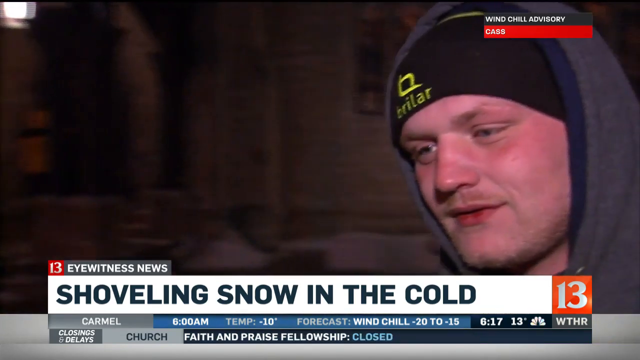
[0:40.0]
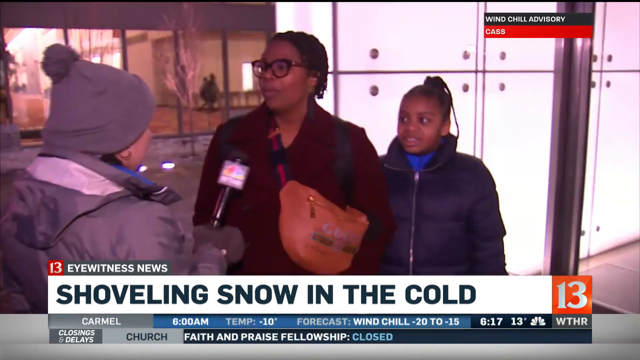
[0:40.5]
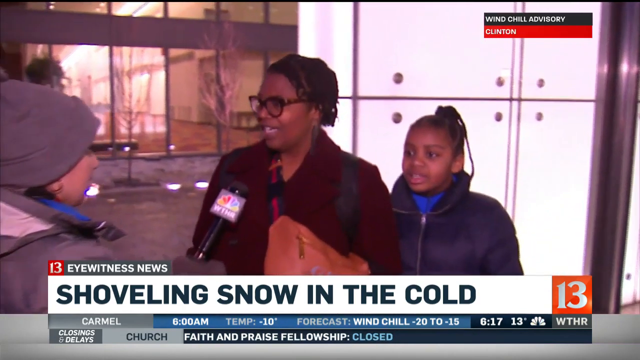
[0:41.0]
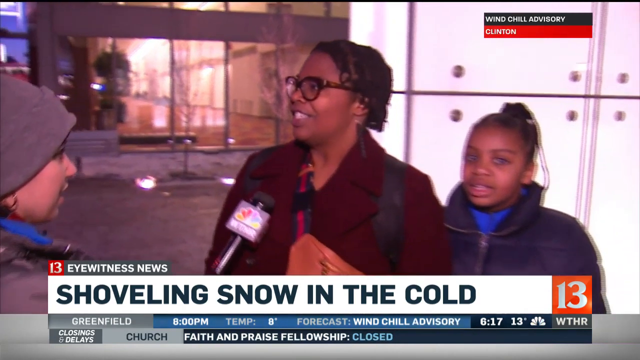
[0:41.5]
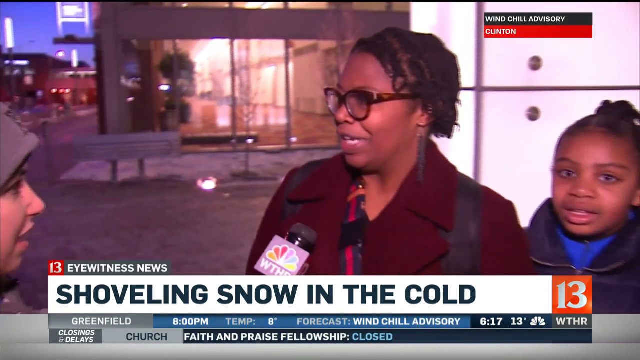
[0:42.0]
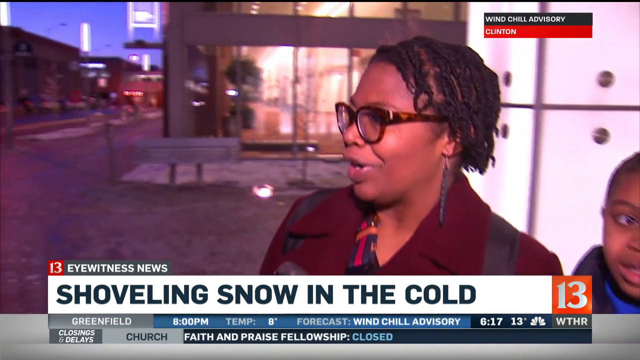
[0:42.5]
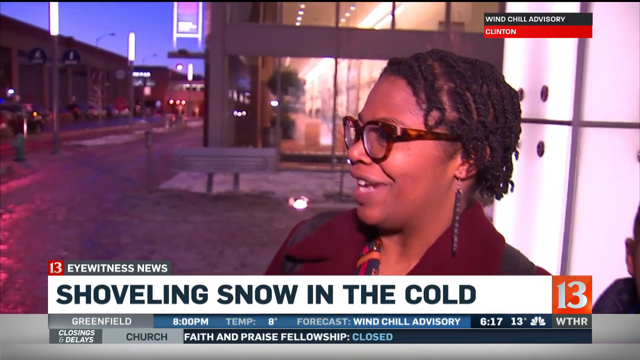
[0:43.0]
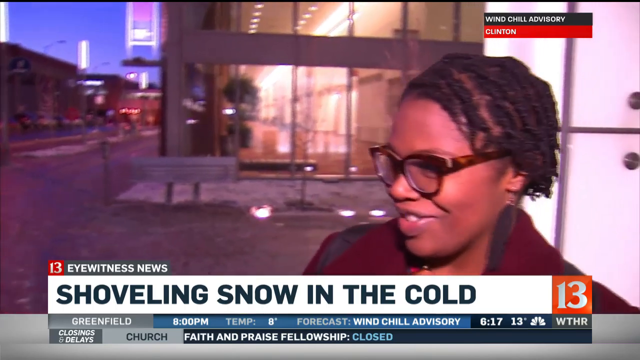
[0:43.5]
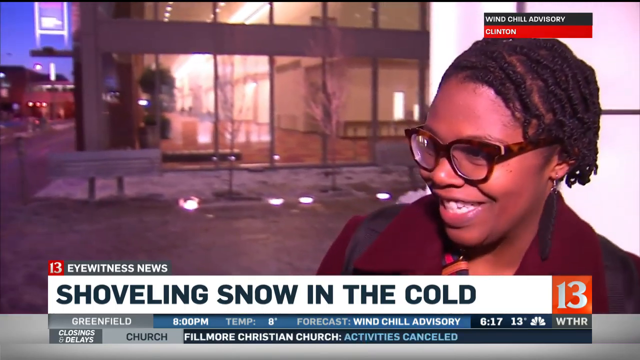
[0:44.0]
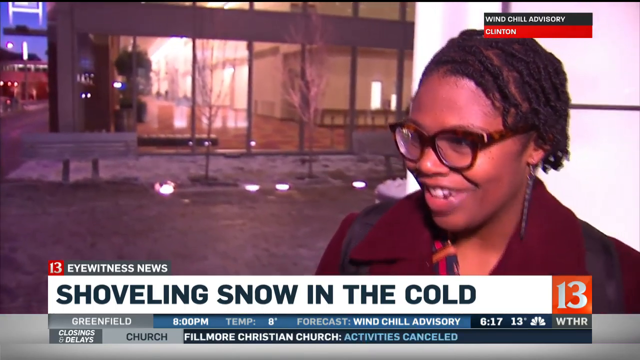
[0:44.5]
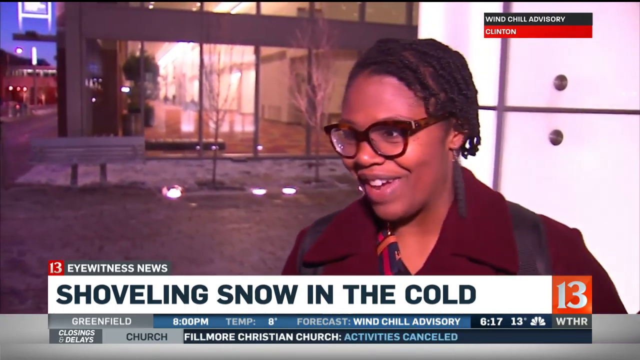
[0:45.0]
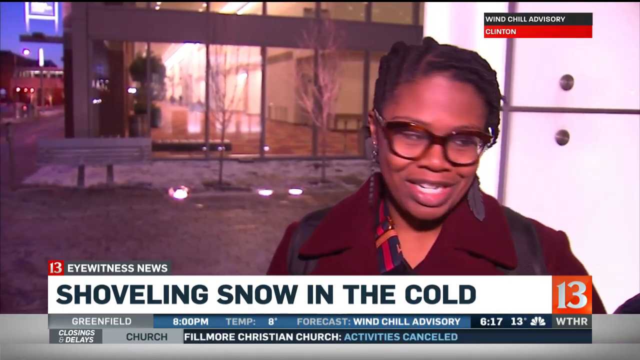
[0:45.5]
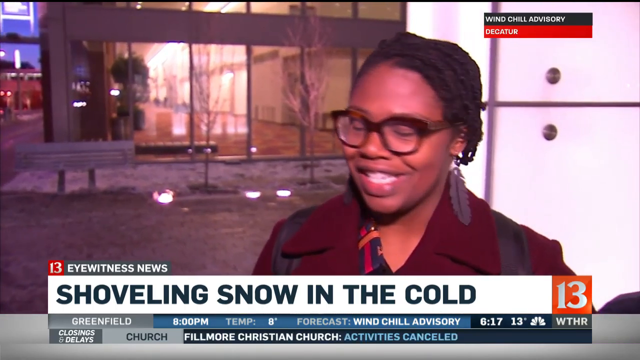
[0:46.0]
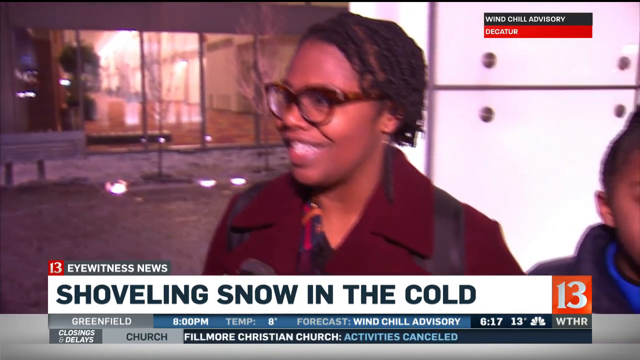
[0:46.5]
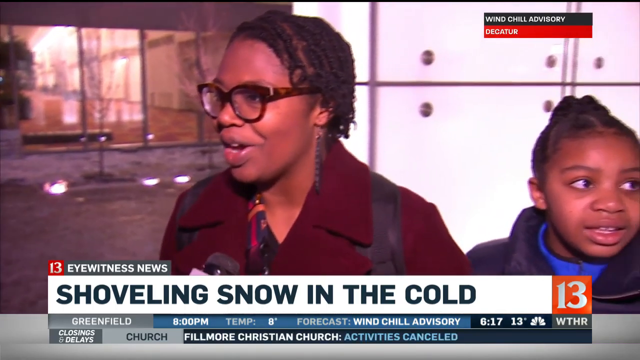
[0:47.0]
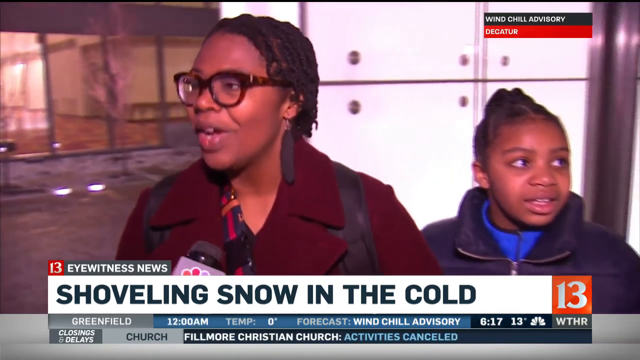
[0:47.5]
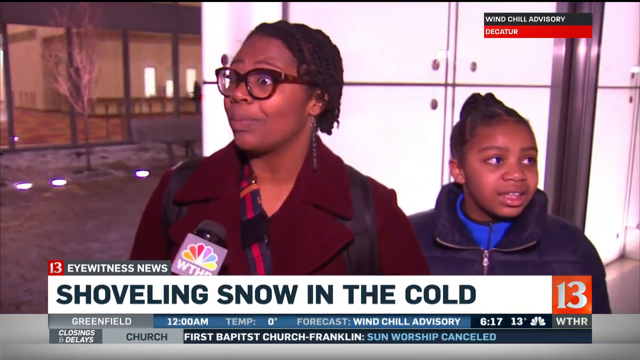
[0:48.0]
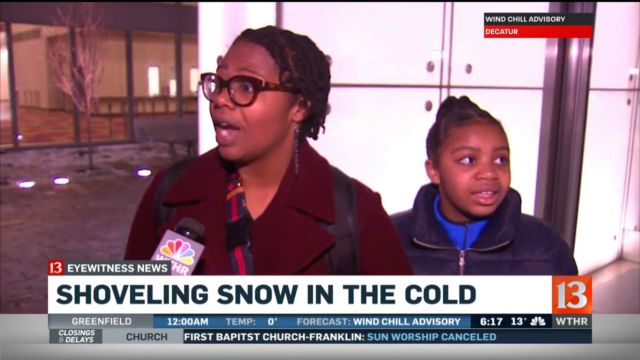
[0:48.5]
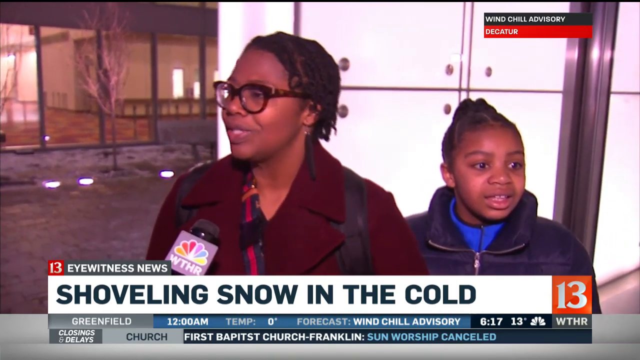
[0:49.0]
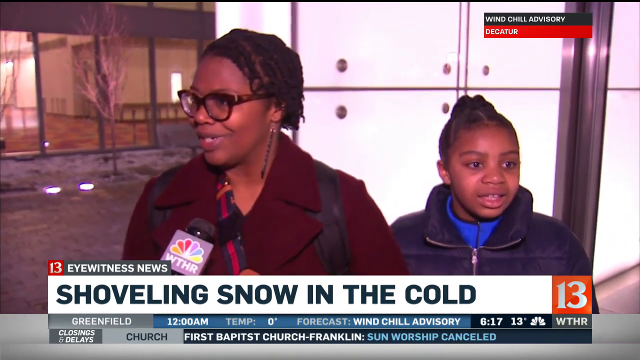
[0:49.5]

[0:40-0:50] A young man appears with a red-looking face. She wears a hoodie, a beanie and a net. A woman in a black robe, spectacles and a maroon jacket speaks to the press while with a small girl, her daughter. The woman laughs and looks at her daughter, who looks cold, and keeps talking. The video then cuts to a glass building that is lit and empty inside, then moves through the street before cutting away.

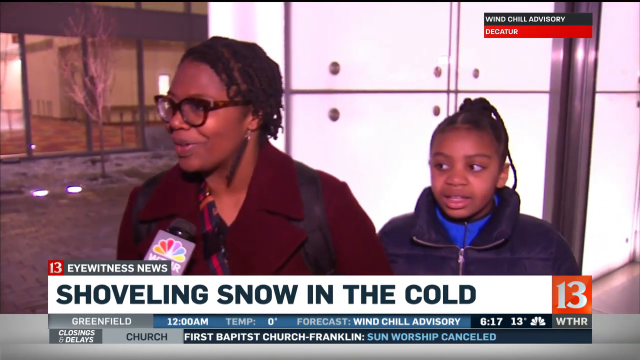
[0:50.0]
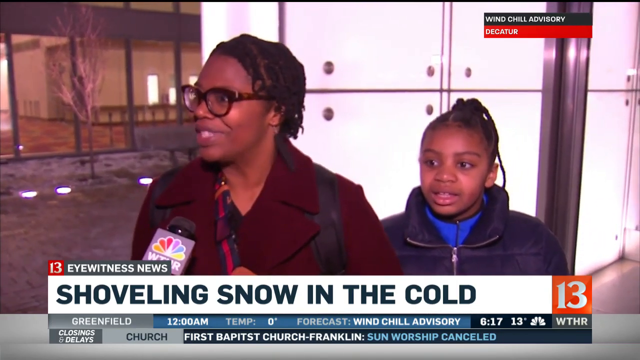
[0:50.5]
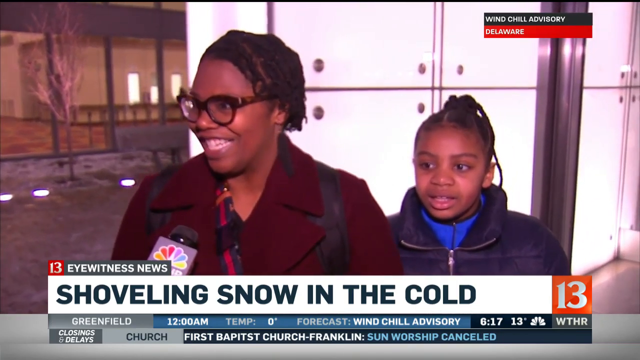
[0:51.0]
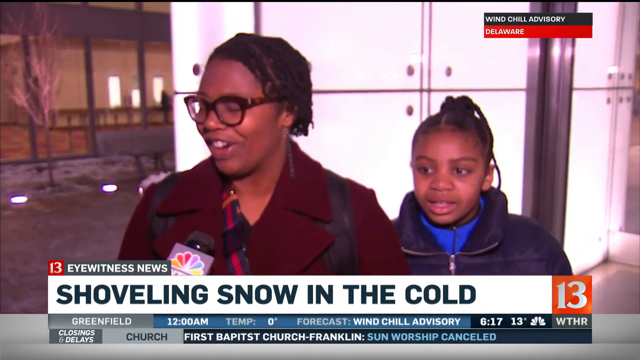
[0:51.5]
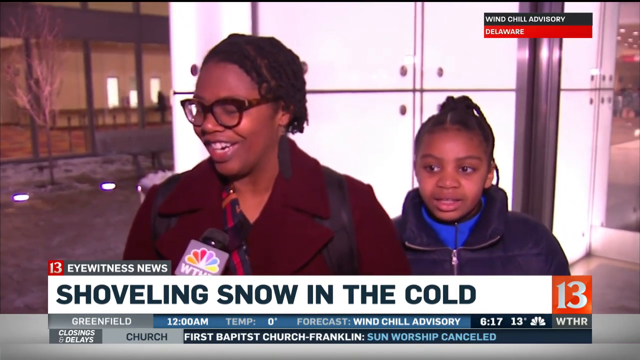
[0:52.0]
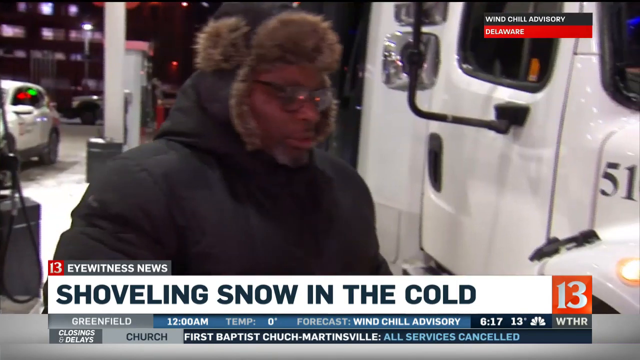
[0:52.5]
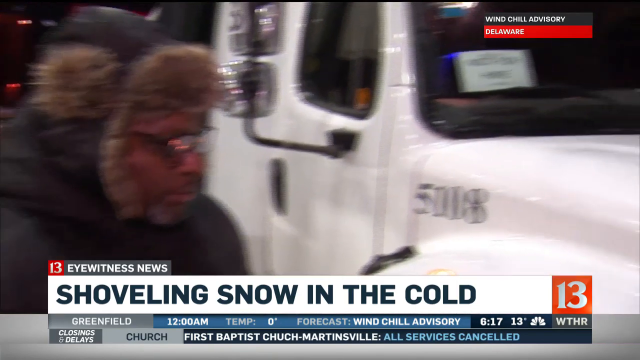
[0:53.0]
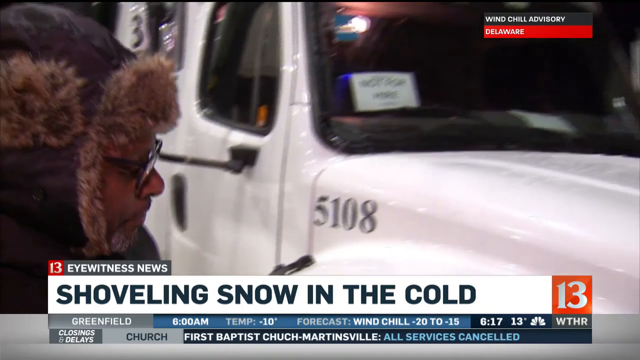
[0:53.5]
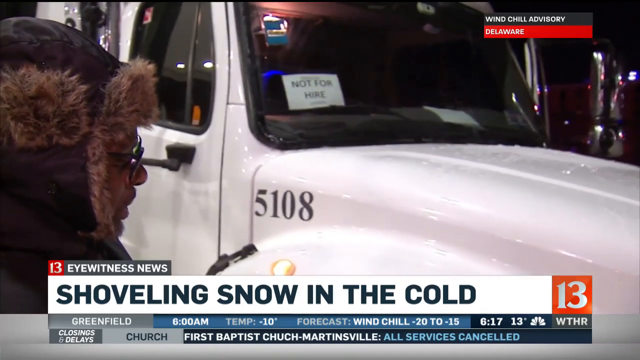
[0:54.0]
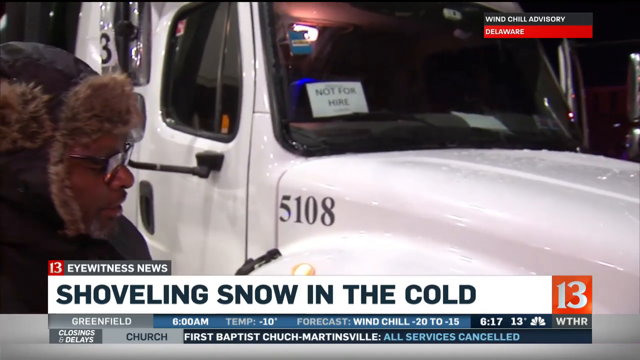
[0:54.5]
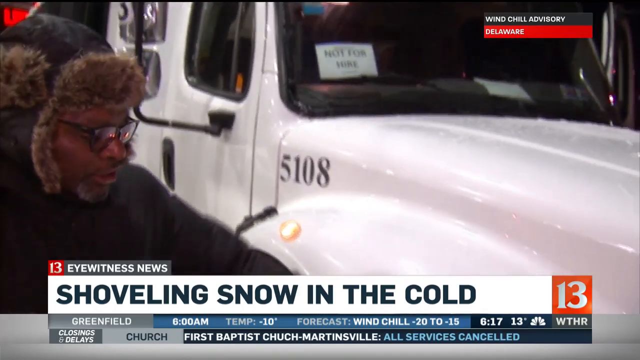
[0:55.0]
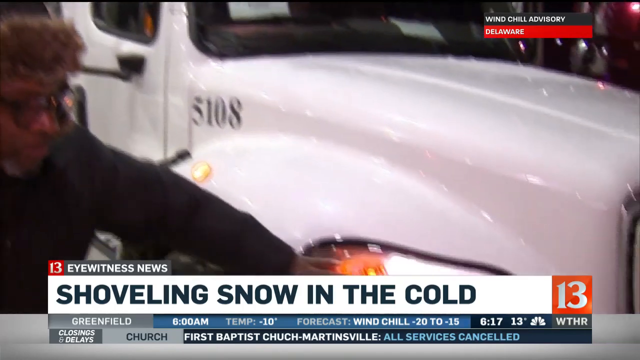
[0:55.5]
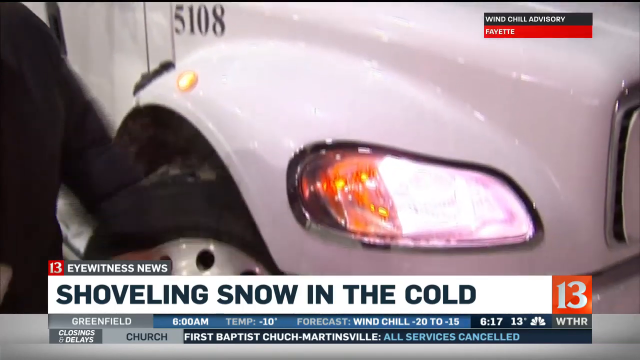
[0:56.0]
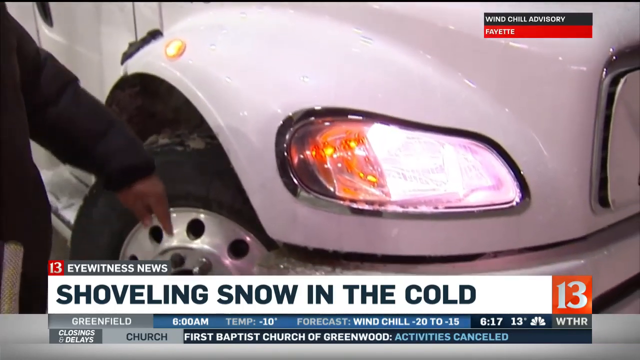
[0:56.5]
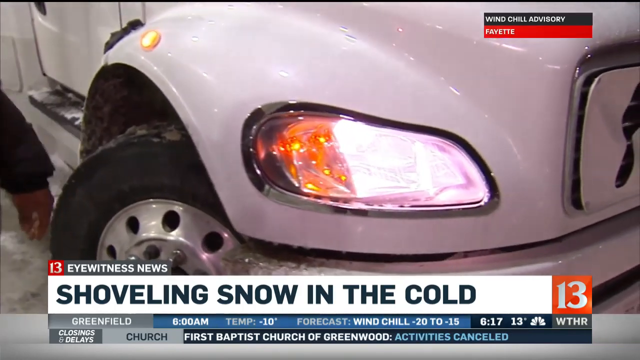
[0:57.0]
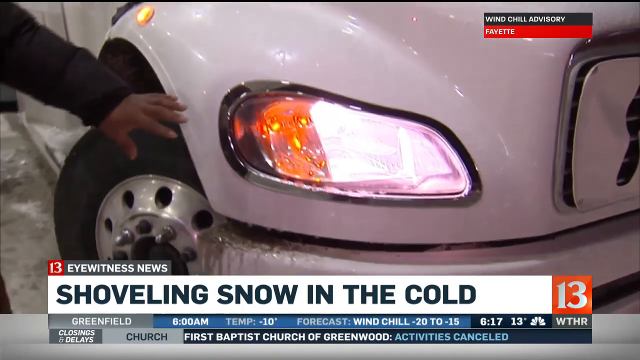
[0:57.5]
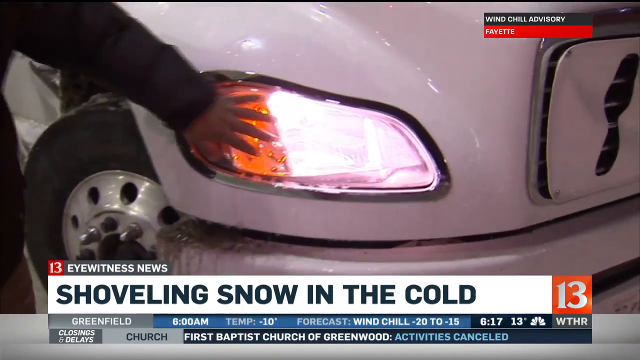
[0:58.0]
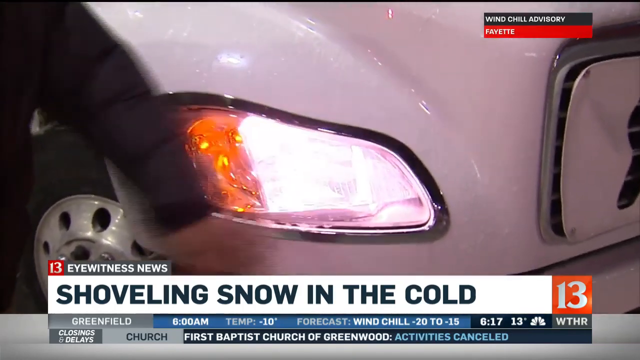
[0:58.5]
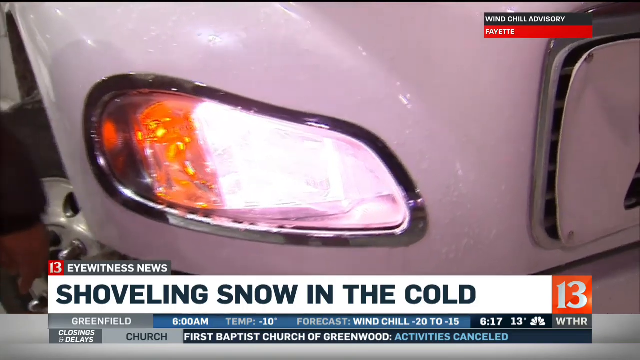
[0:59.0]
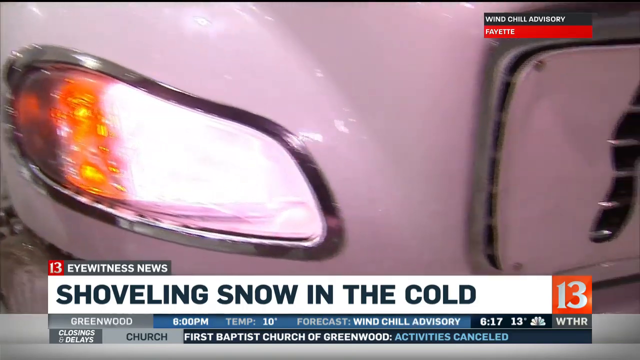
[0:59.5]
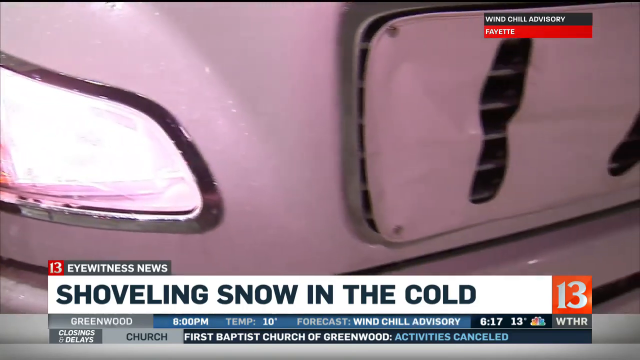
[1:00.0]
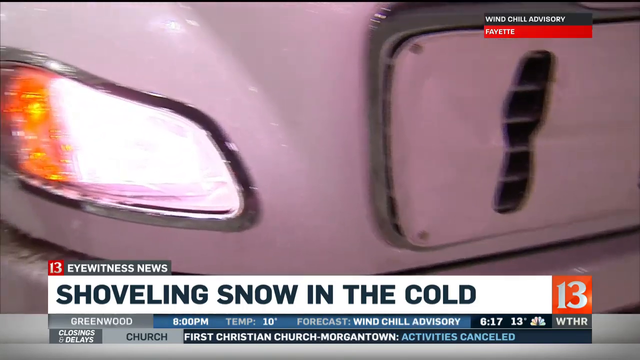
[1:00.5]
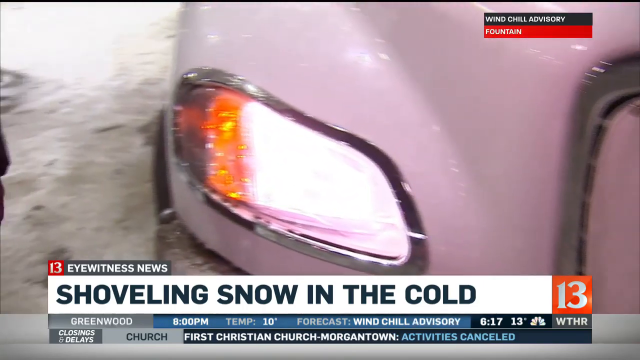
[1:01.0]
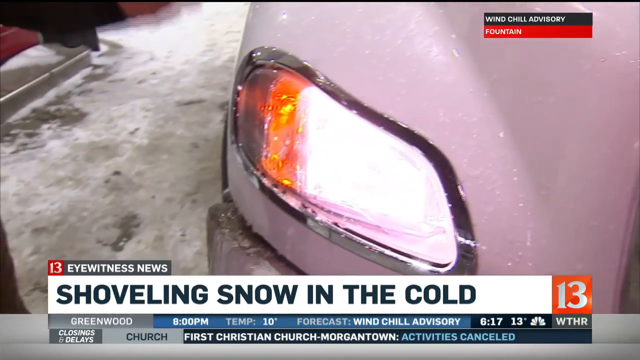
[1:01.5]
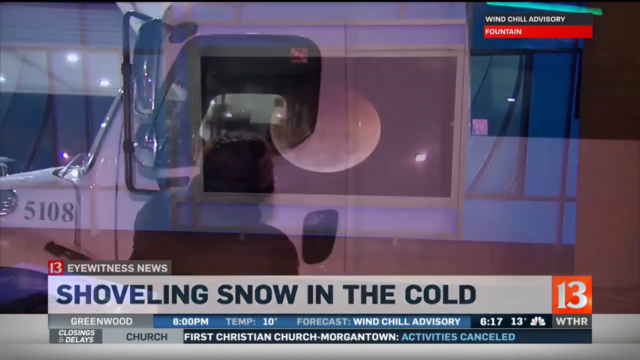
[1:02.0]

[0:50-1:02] An old man wearing a jacket and spectacles walks around his truck, inspecting it and showing how it was affected by the snow. He goes to the other side to open the truck doors, and he seems concerned about his truck as he walks around it. He talks to the press. On screen appears weather information for Greenfield: 6 o'clock in the morning, a temperature of minus 10 degrees Celsius, a forecast wind chill of minus 22 and minus 15, and "WTHR 13". This is a news report about the snow and the people who clear it in the cold.